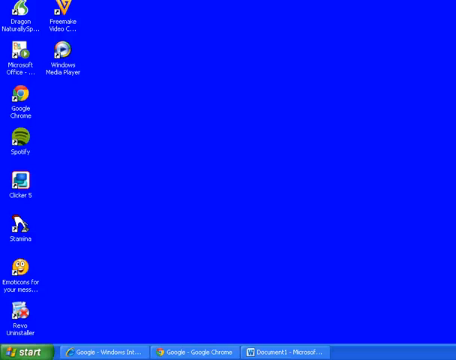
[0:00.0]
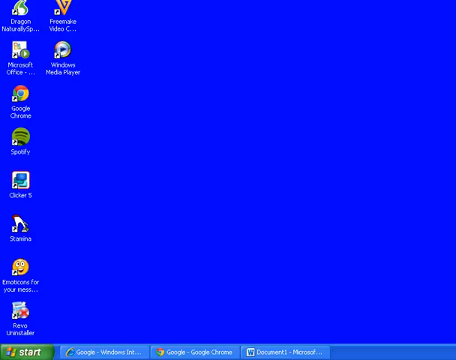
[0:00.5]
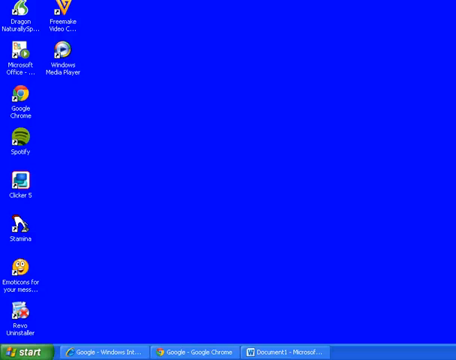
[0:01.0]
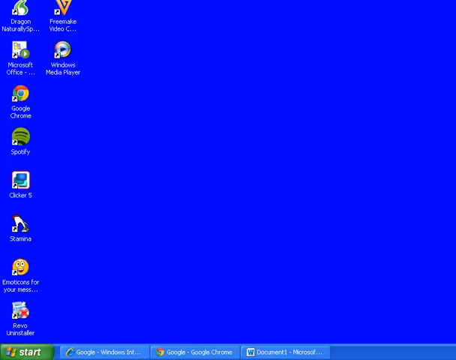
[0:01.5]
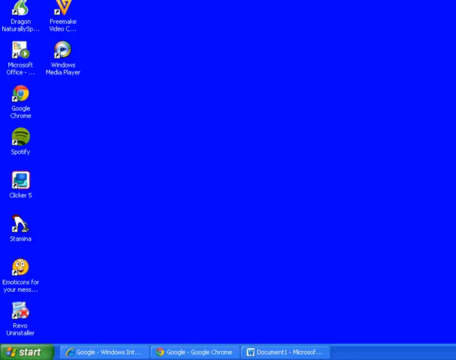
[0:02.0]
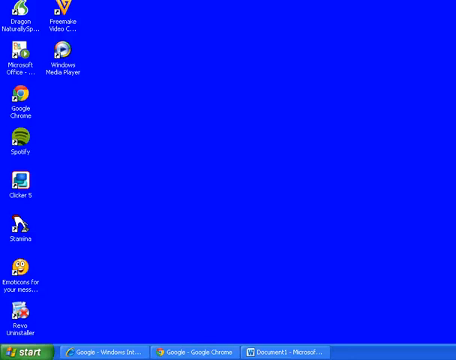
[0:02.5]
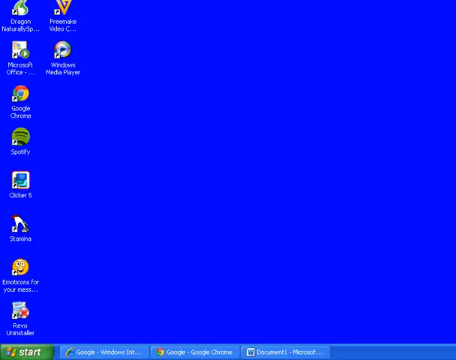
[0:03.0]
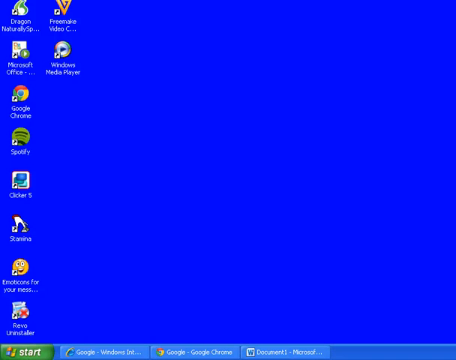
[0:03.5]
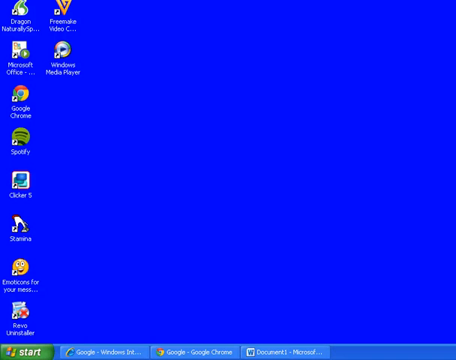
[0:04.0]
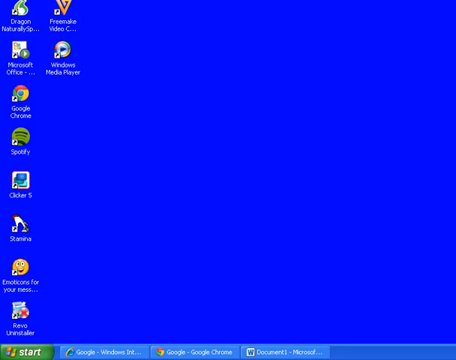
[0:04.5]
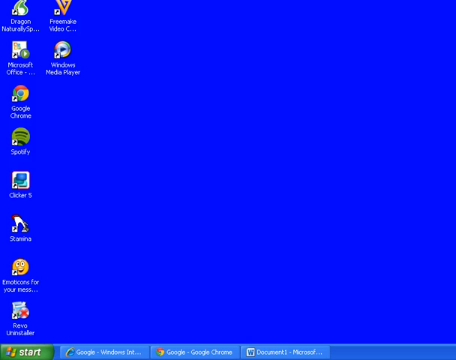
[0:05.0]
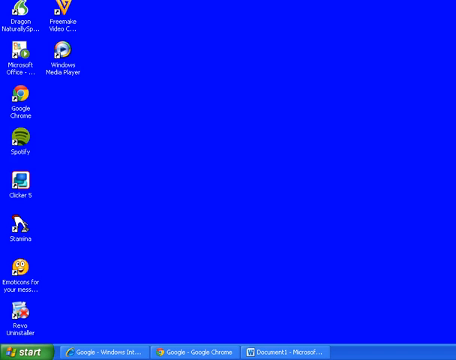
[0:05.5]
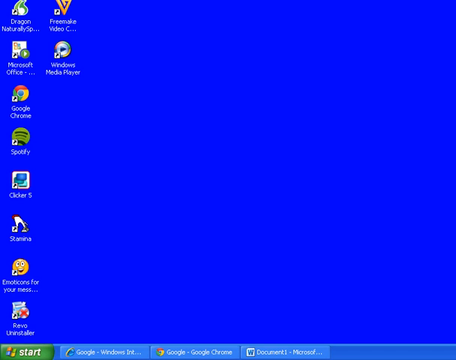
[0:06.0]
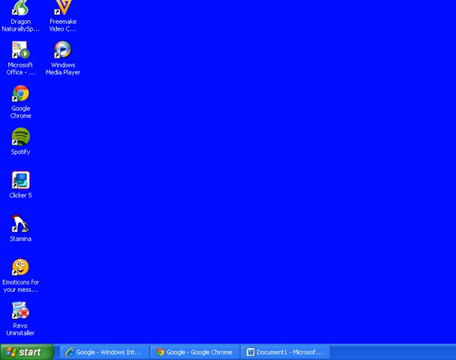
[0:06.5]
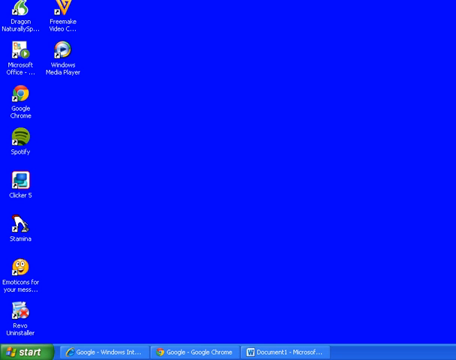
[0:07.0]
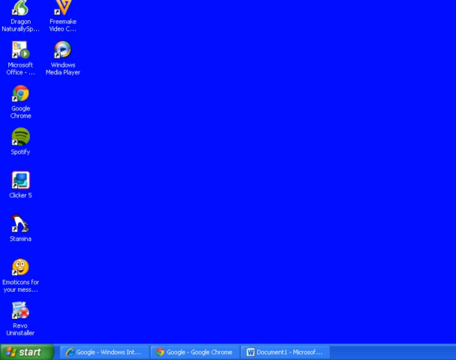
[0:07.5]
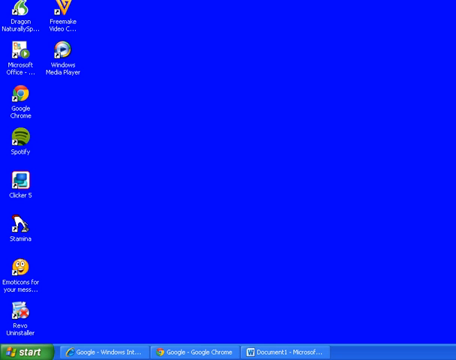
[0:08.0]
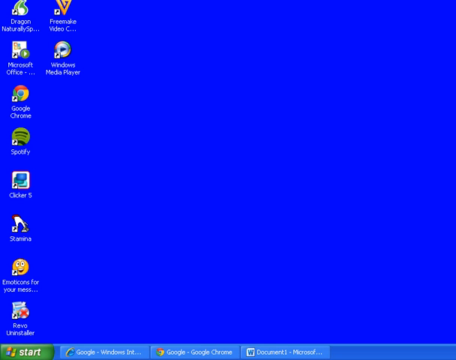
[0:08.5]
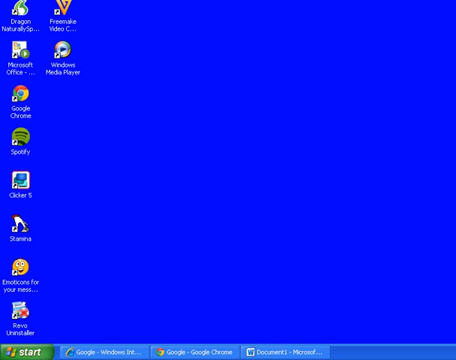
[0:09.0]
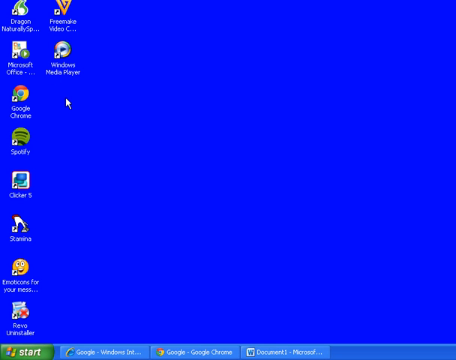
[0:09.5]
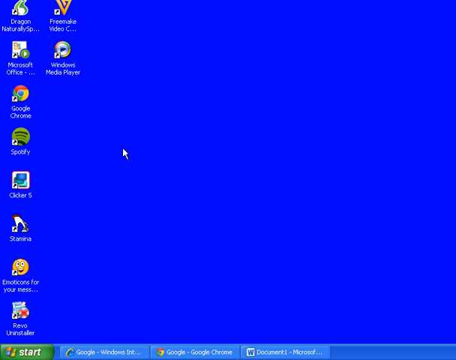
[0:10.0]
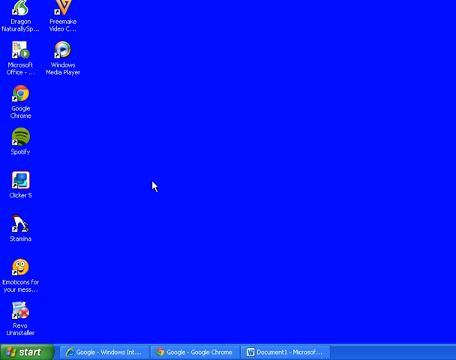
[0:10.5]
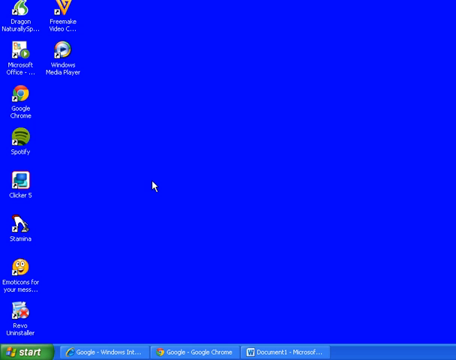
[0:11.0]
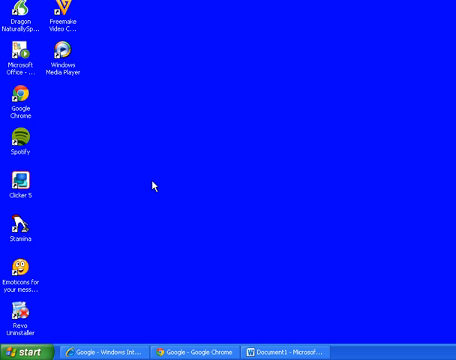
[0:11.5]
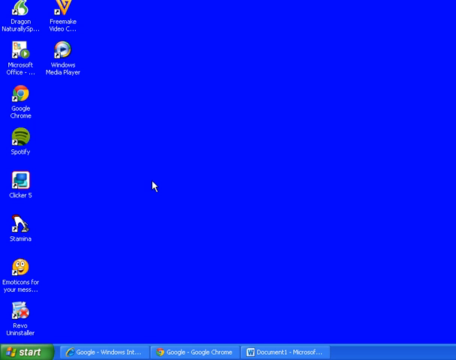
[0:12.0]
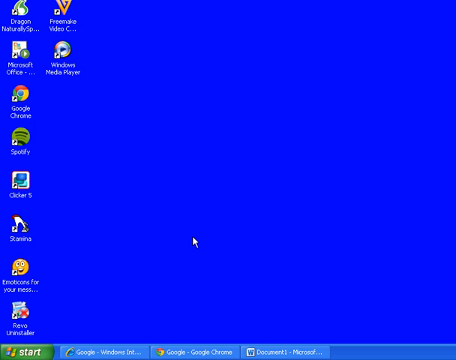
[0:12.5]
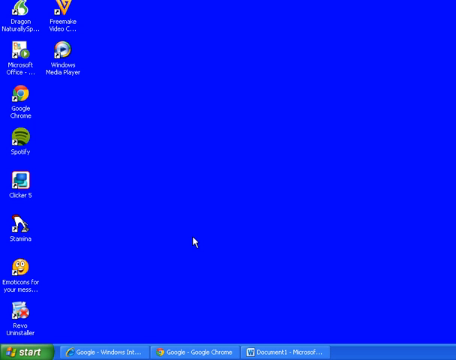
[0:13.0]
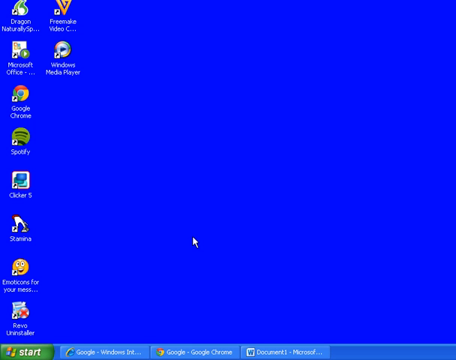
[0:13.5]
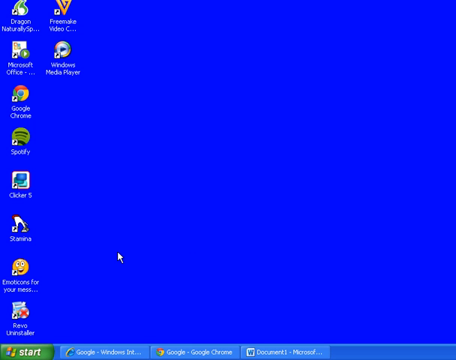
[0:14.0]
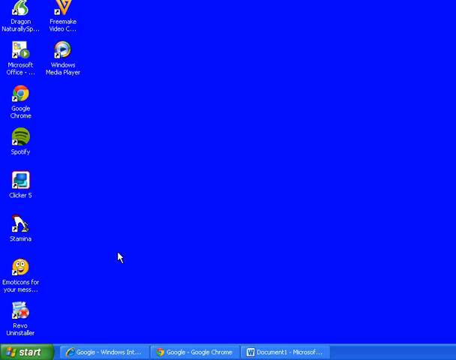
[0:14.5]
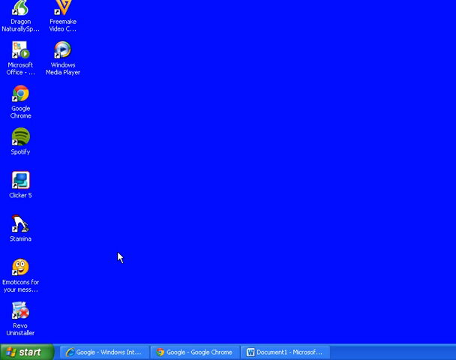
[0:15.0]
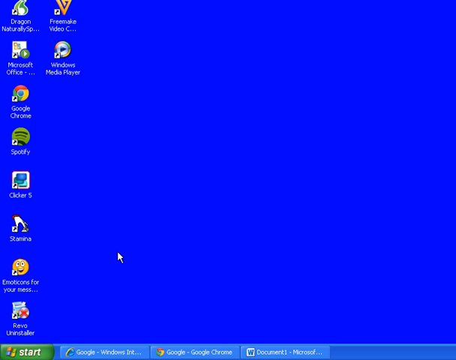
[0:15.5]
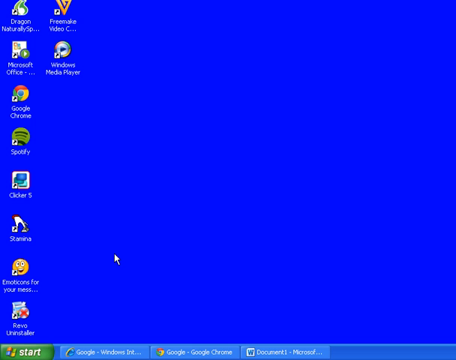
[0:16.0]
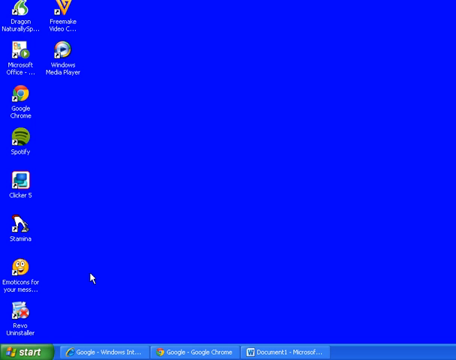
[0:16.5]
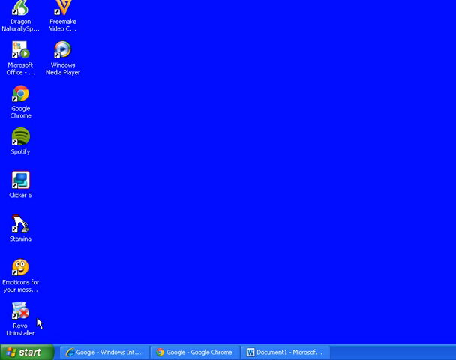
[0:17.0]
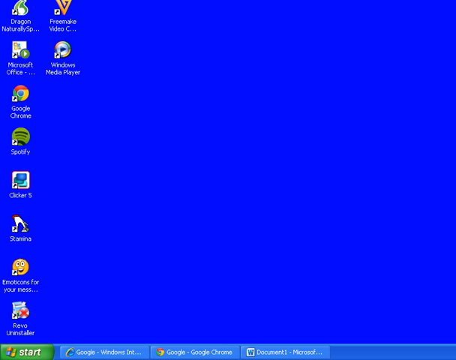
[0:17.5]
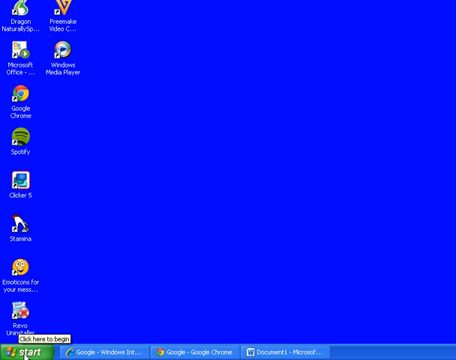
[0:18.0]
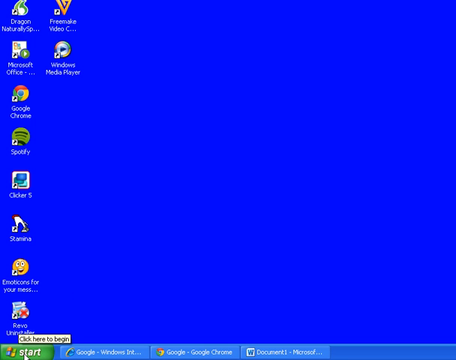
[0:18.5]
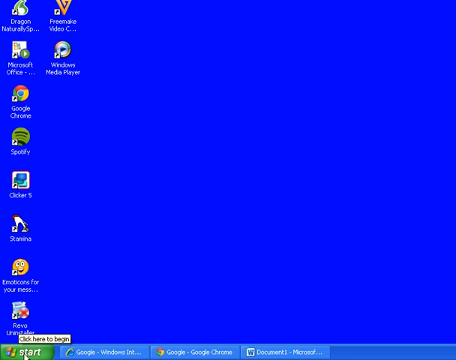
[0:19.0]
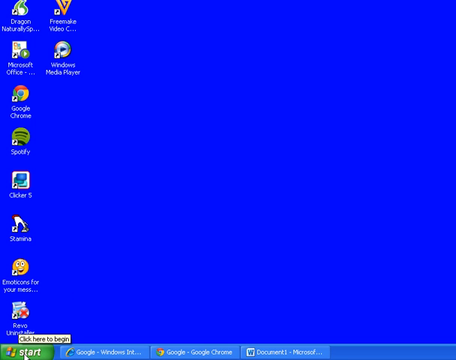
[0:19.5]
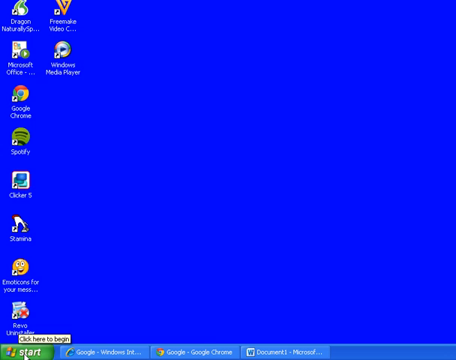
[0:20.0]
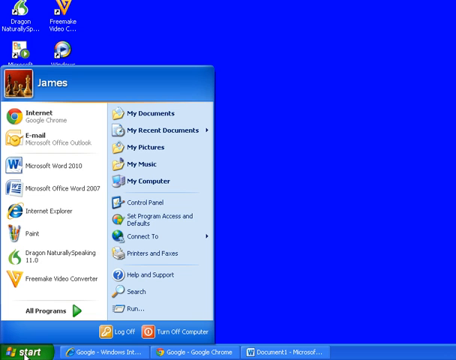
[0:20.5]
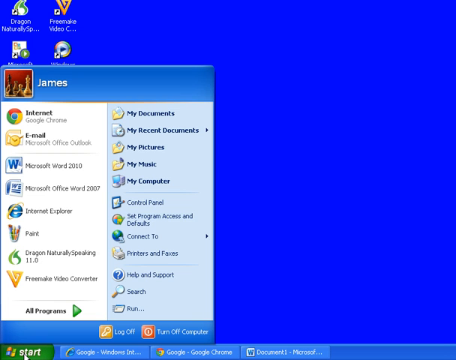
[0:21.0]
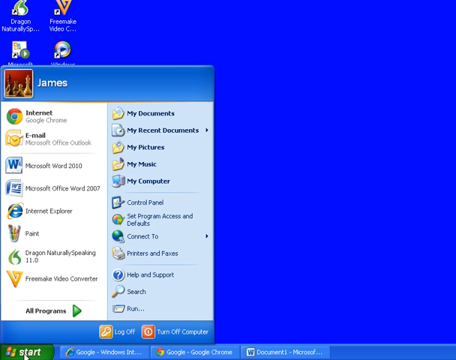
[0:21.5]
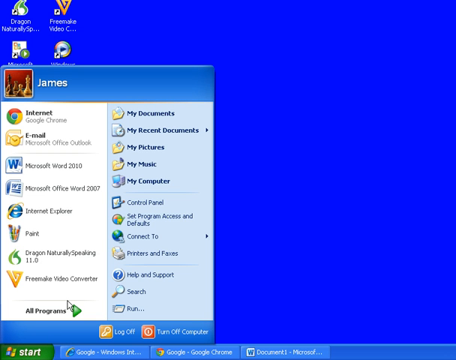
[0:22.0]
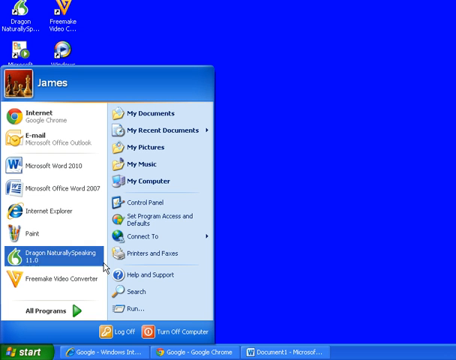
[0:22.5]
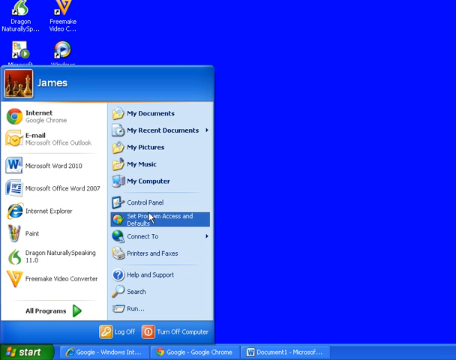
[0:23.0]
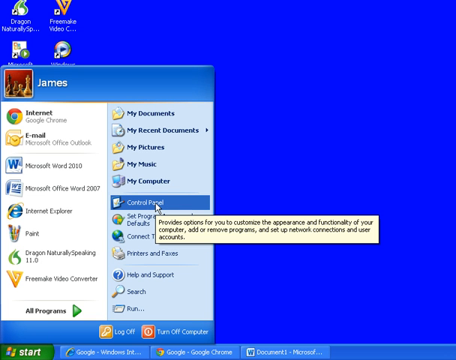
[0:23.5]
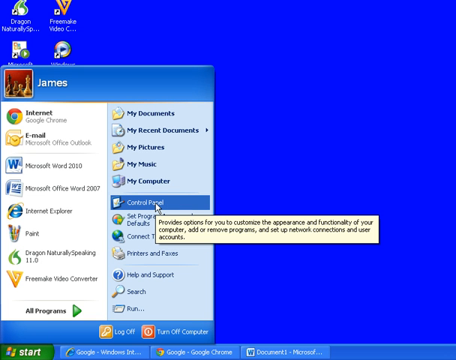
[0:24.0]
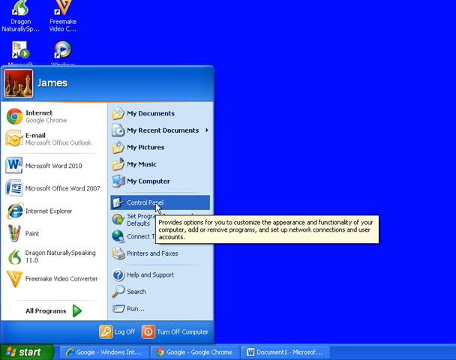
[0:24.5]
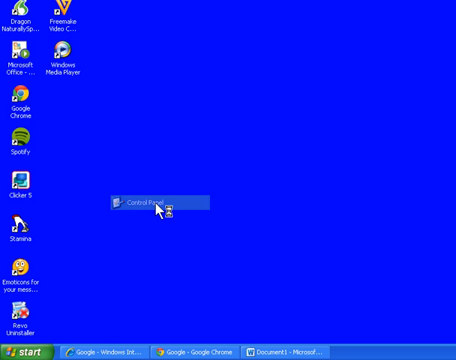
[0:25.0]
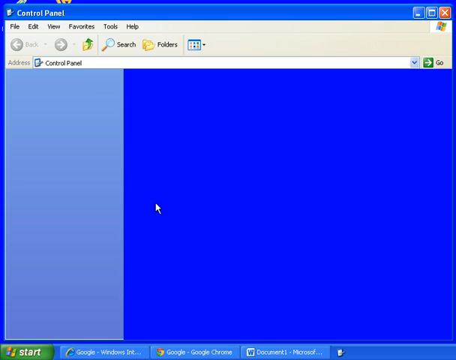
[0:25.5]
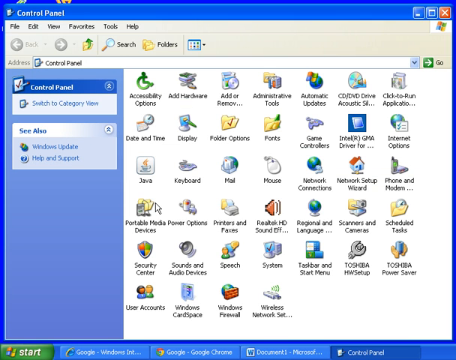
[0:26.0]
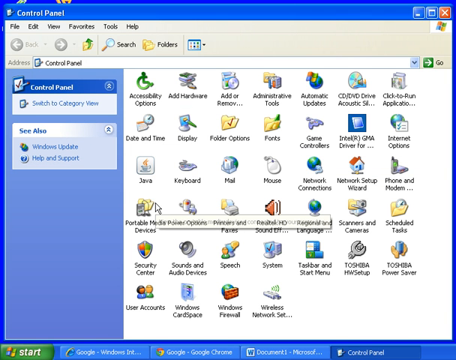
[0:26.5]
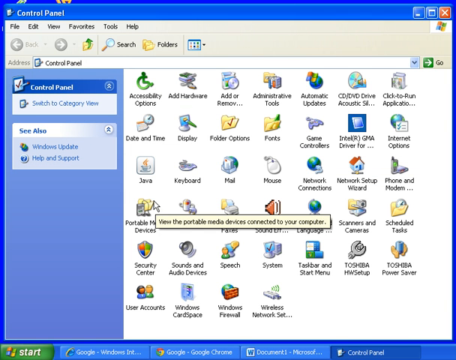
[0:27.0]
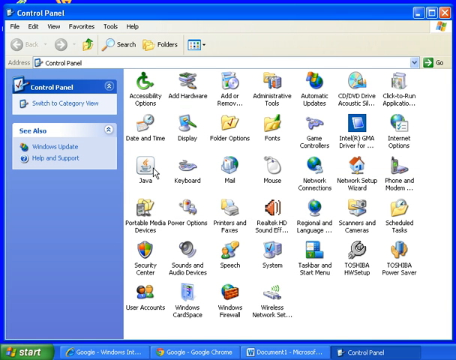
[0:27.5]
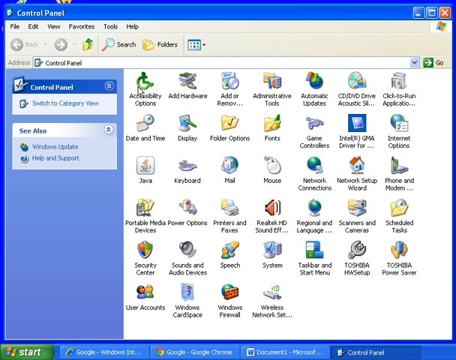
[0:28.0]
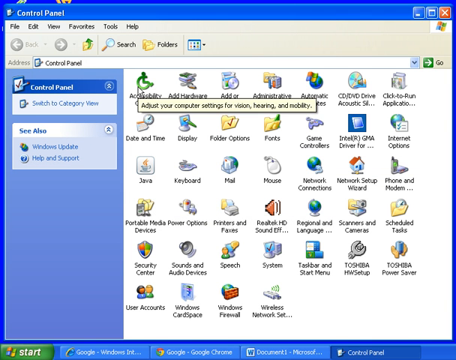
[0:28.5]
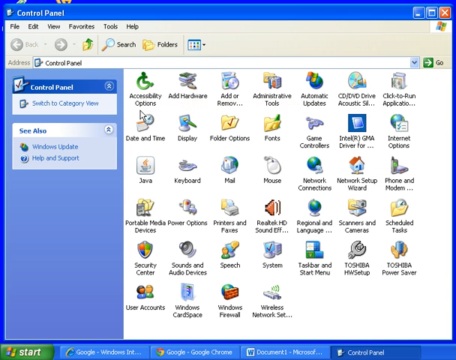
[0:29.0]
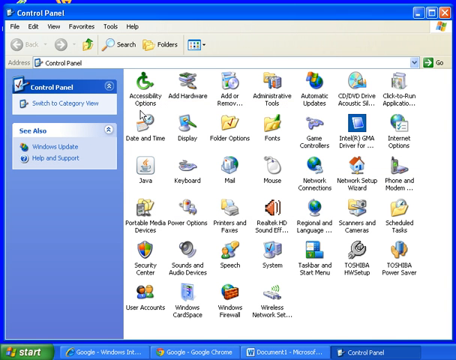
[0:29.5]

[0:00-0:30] A computer screen shows a blue background with a number of icons, labeled "Google Chrome", "Spotify", "Microsoft Office", "Windows Media Player" and others. The start button is visible, along with tabs for Google Chrome, documents and Microsoft Word. The computer looks like an old Windows machine. The cursor moves around the screen, and the user clicks the start button. The start menu shows "James", apparently the user's name. The user clicks the control panel, which opens, and looks through it.